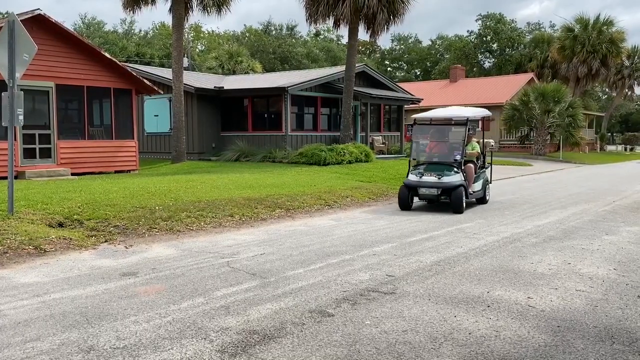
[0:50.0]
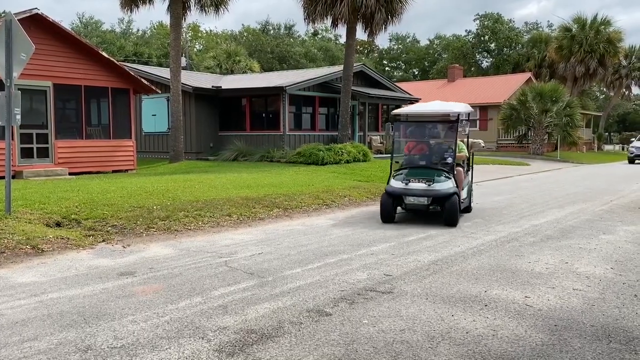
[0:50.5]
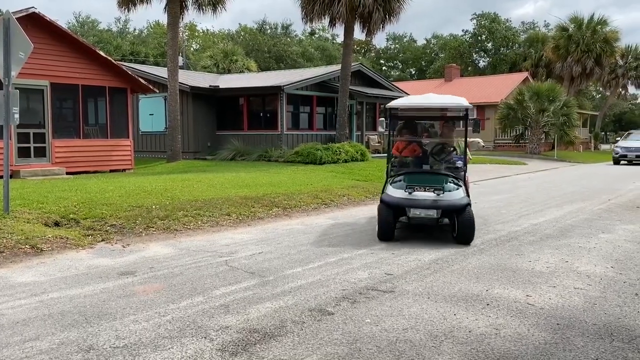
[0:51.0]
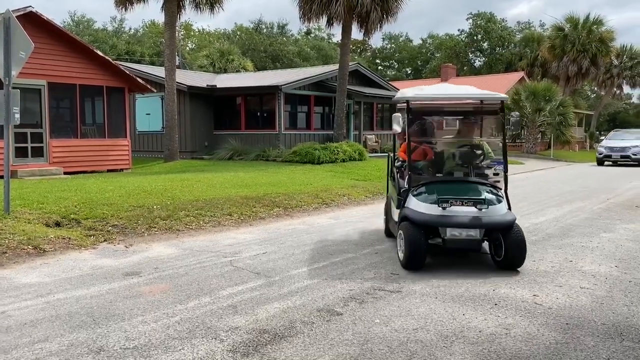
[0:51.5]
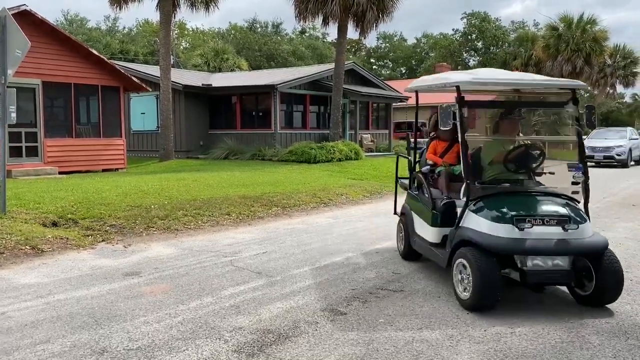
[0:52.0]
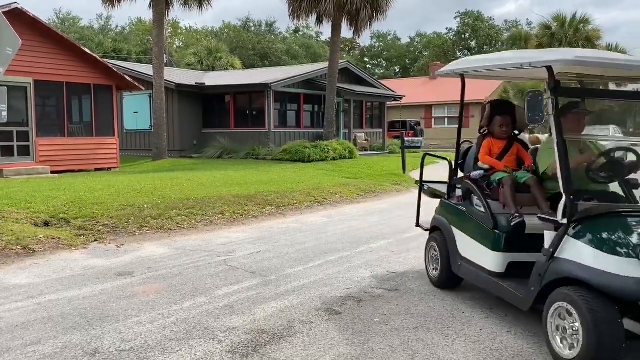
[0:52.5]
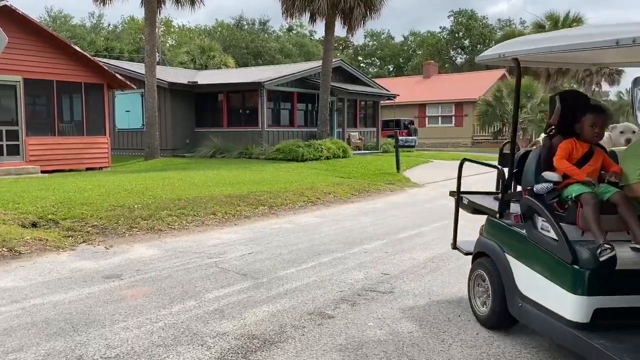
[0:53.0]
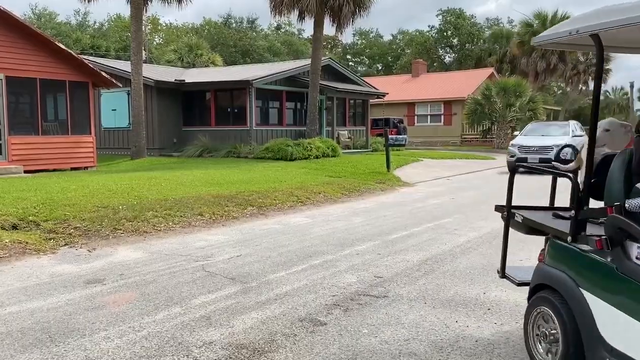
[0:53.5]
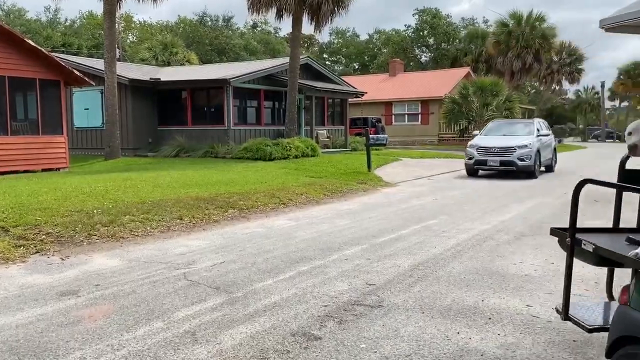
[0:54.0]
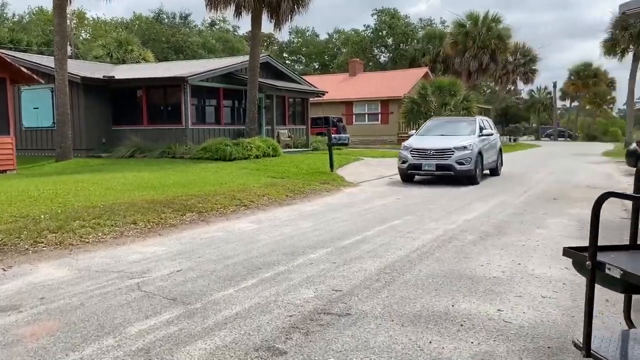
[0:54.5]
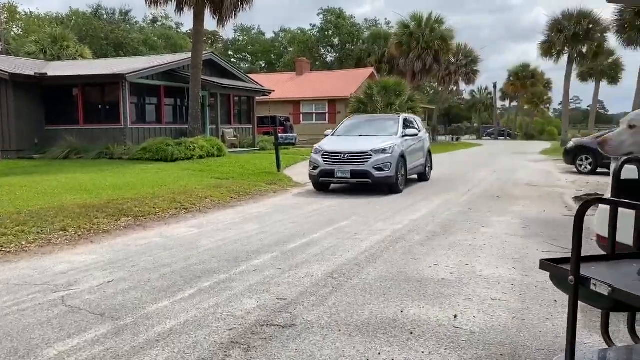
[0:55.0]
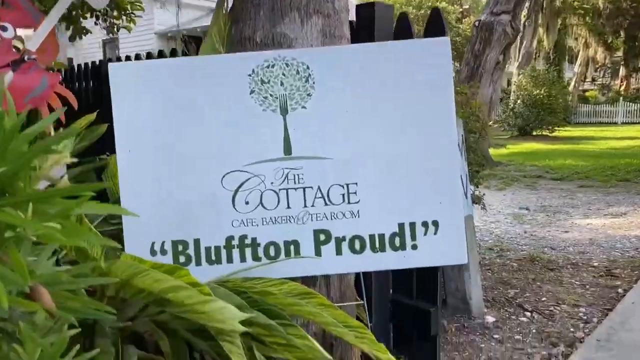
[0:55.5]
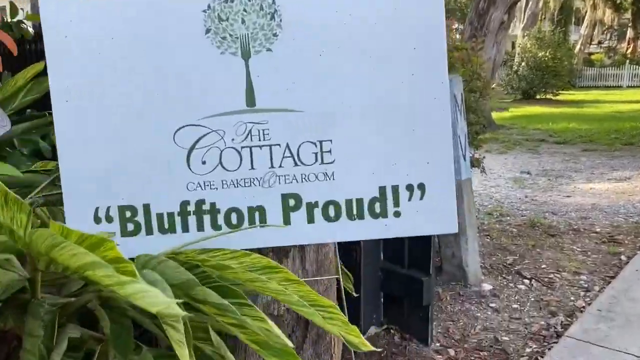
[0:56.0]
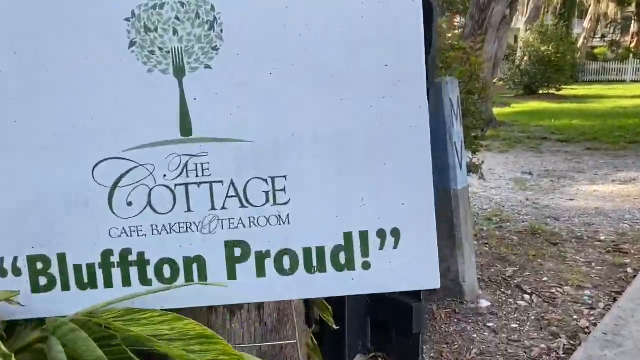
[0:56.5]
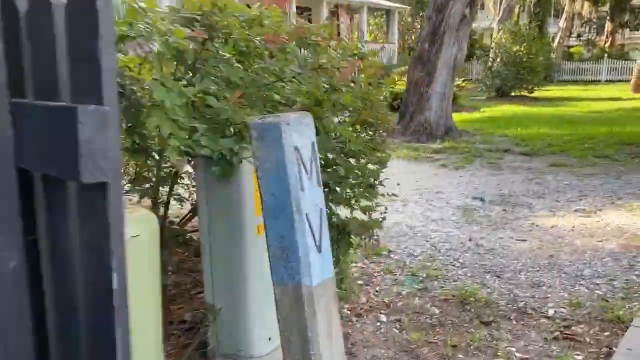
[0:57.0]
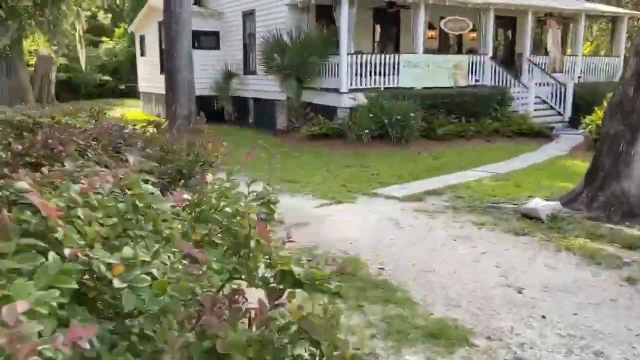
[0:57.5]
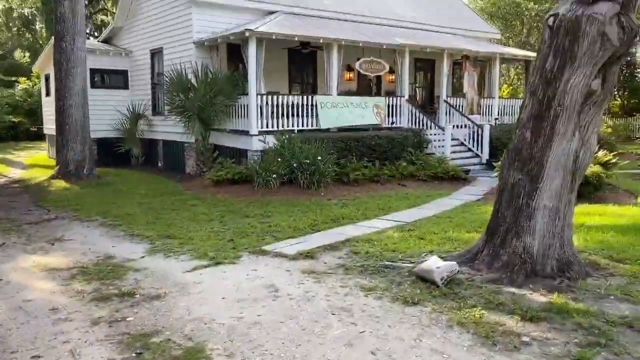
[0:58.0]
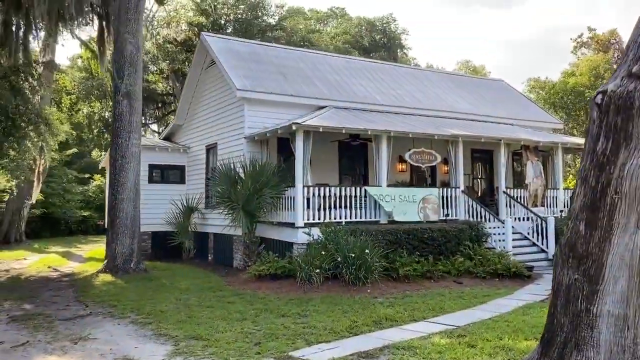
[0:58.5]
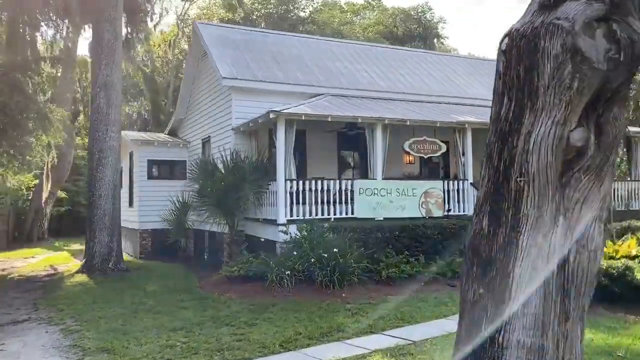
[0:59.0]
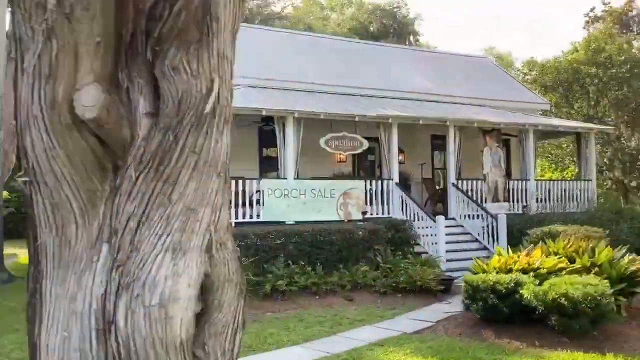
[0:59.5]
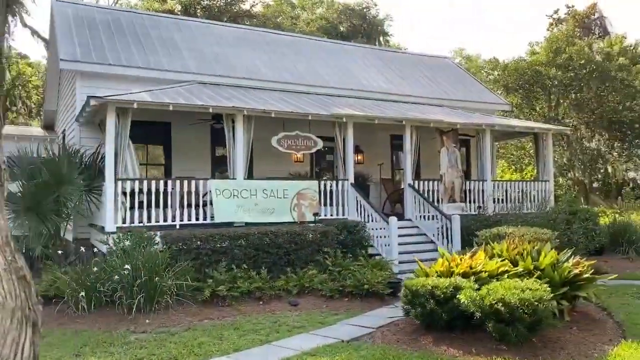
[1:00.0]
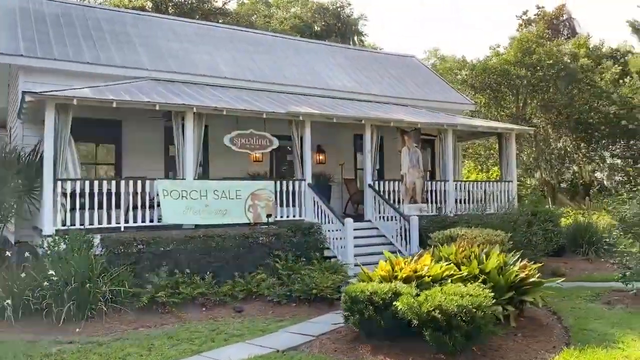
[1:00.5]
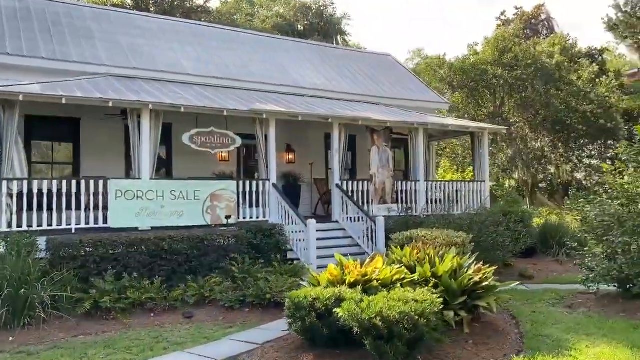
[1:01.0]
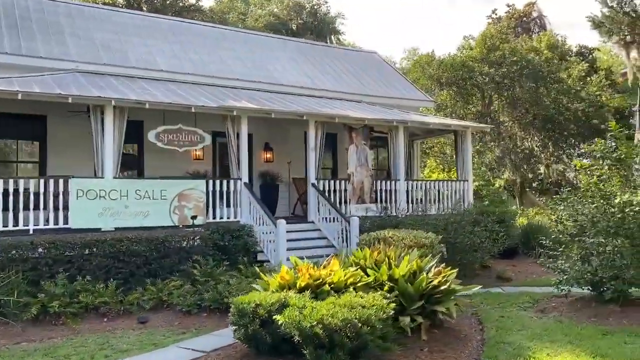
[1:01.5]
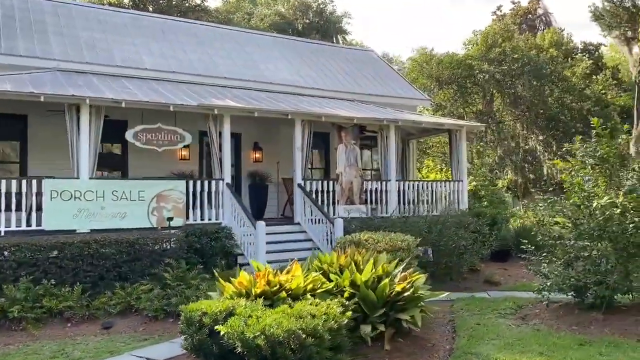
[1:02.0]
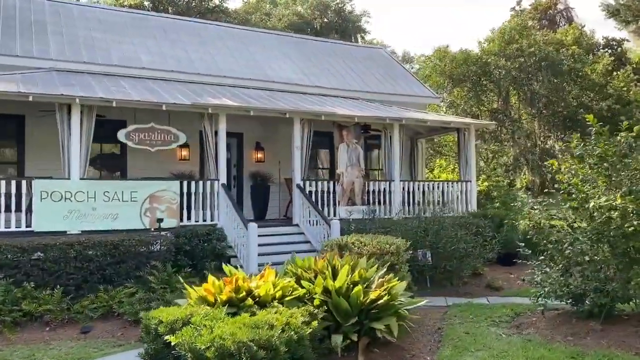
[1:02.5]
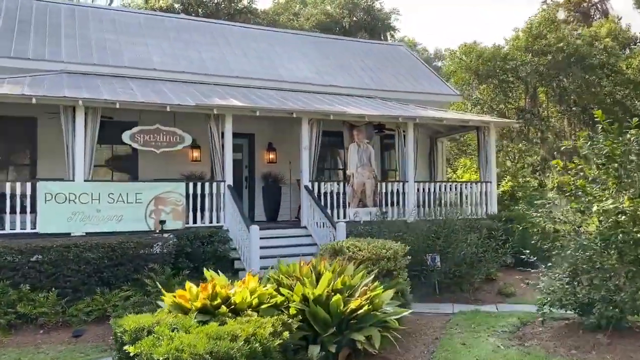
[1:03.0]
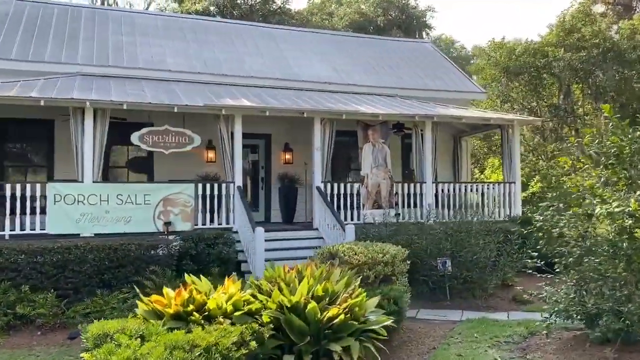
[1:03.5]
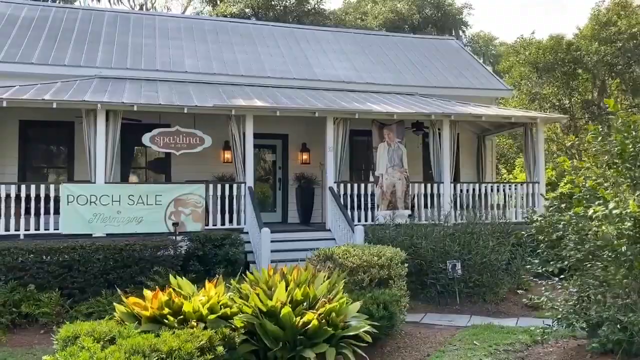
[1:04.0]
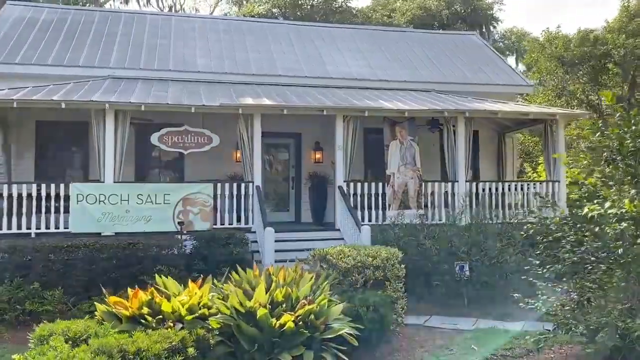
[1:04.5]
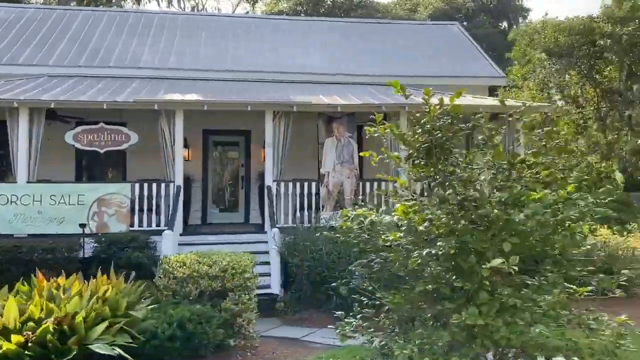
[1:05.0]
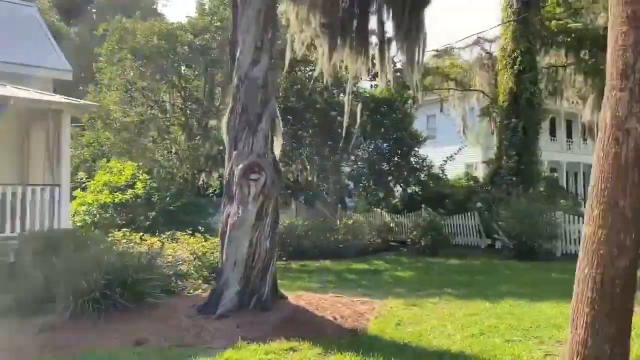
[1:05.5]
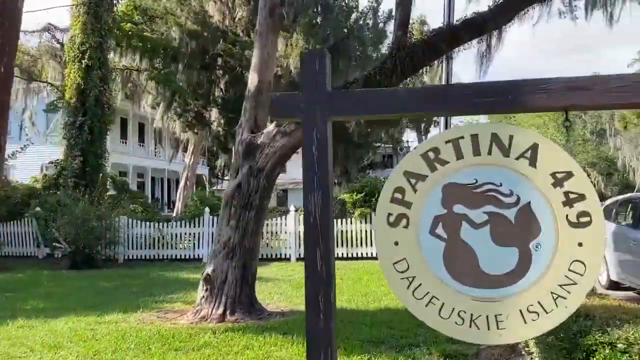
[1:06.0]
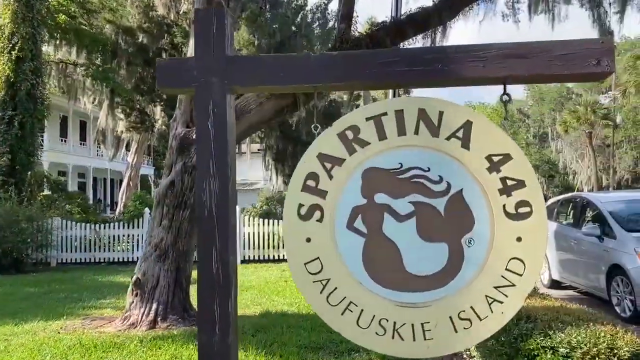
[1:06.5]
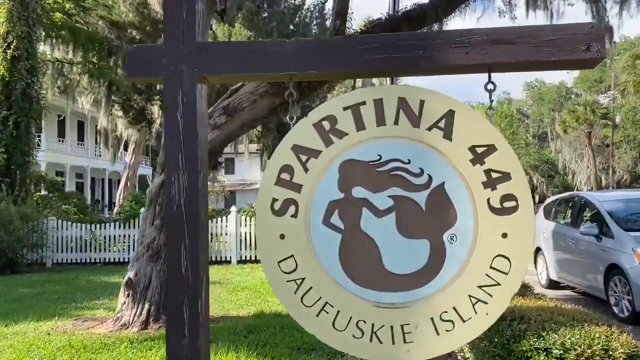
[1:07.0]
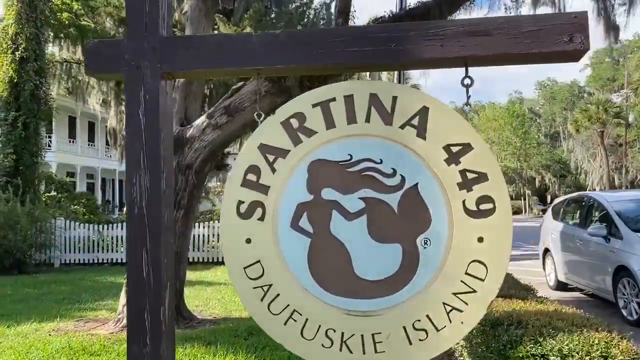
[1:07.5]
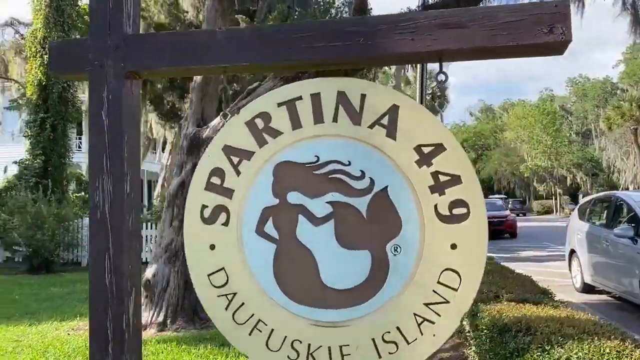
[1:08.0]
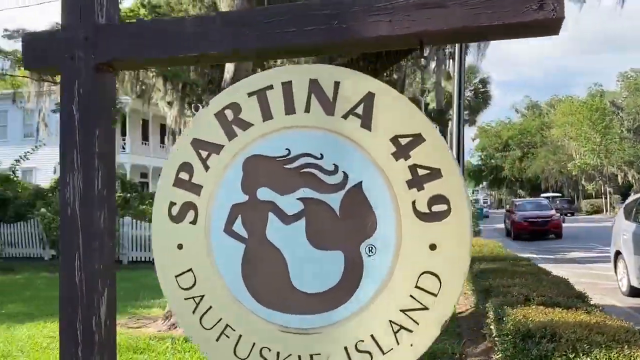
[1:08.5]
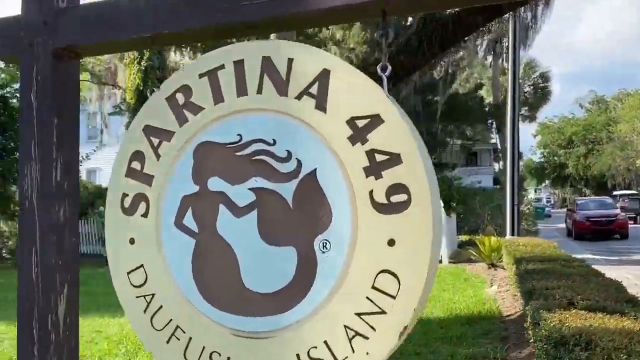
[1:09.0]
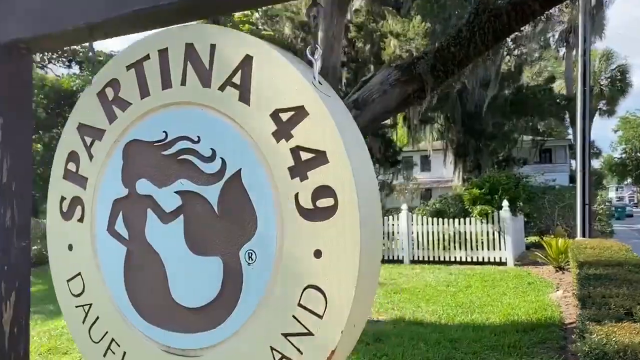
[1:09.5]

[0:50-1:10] Outdoors, the camera faces a city street. In the background are green grass and one-story bungalow-type houses, with palm trees, so the environment looks very tropical. A golf cart driving down the road starts to turn off to its left, as if making a turn really close to the camera, and then parks. In a different shot, whoever is filming walks towards a sign on a tree that says "the cottage, cafe, bakery, and tearoom." The camera then kind of speeds up, as if zooming past the tree with the sign, and focuses on a single-story white house. The camera continues to pan in front of the house, which looks like a commercial business. It then pans over to the right, where a sign hanging down says "Spartina 449." It looks like it is outside a very expensive, fancy two-story house. The person filming kind of strolls past the sign, and the sign moves off to the left.